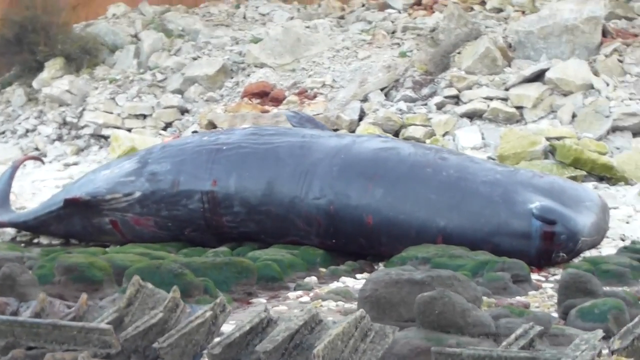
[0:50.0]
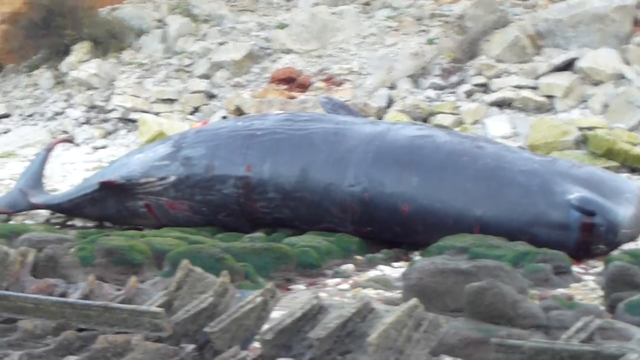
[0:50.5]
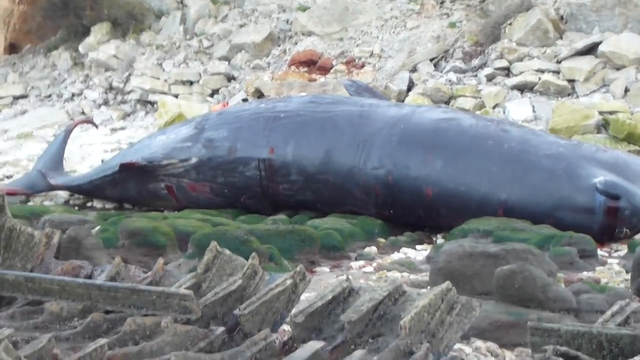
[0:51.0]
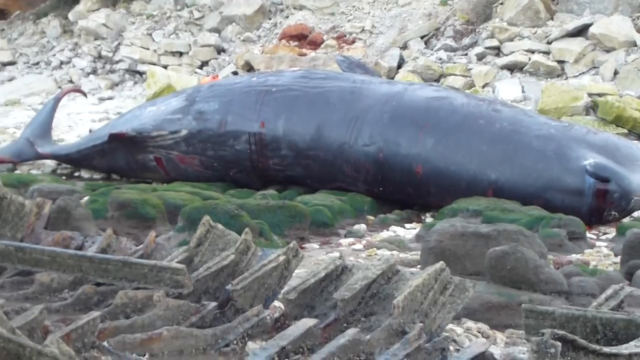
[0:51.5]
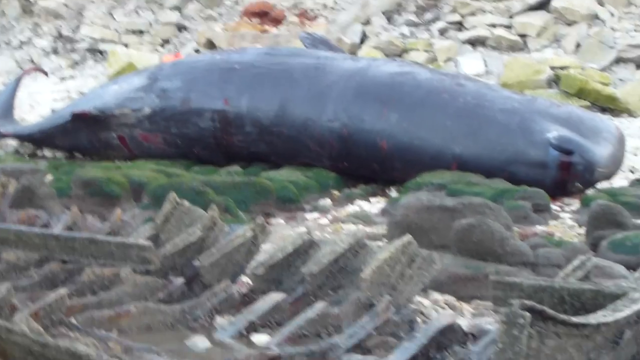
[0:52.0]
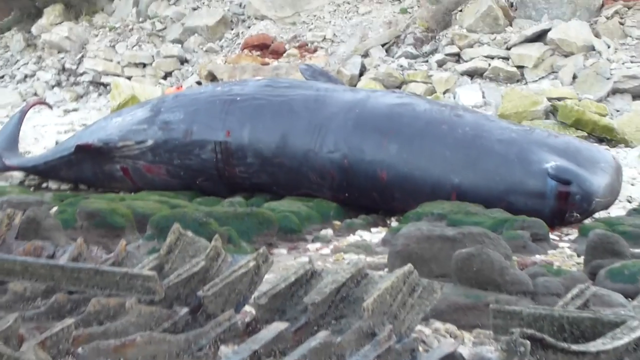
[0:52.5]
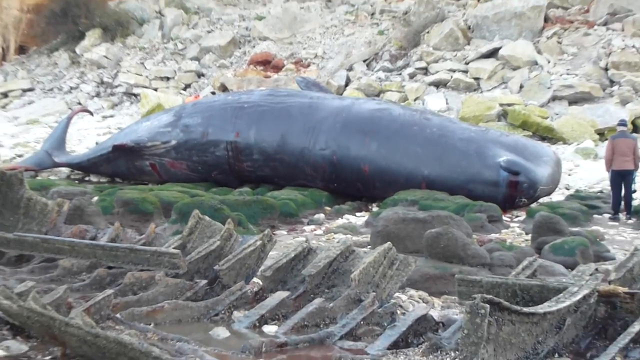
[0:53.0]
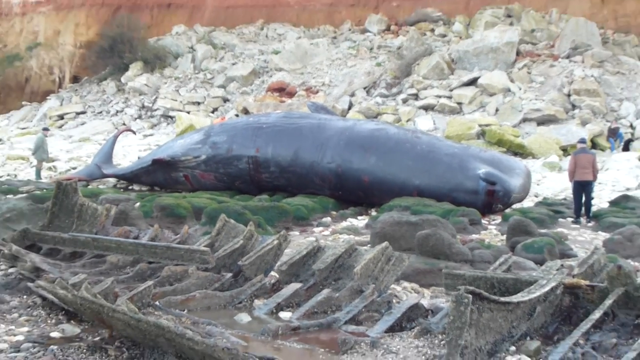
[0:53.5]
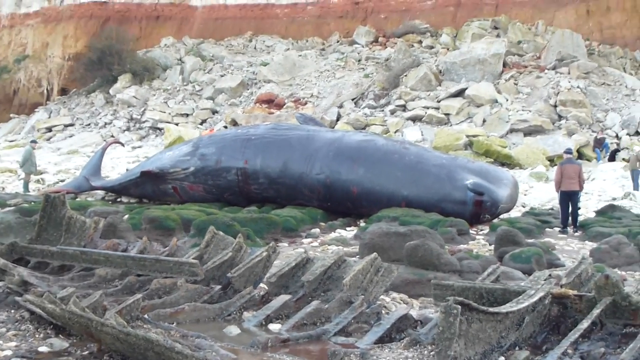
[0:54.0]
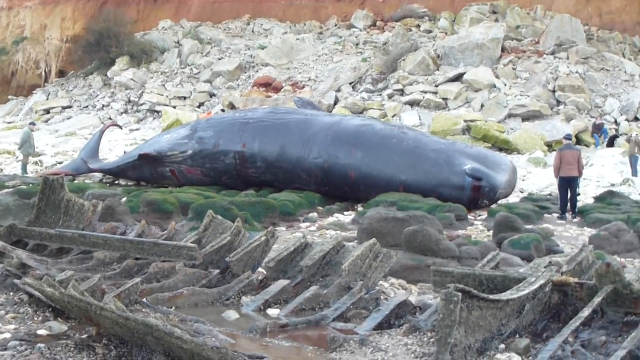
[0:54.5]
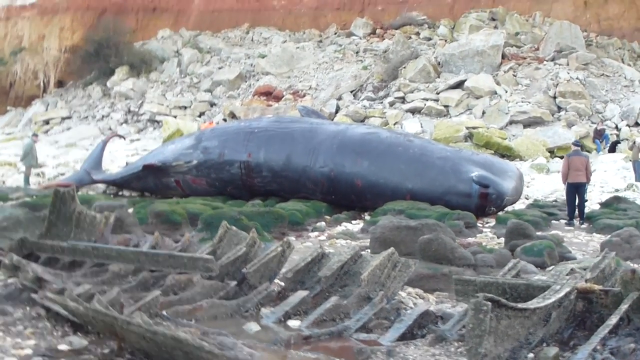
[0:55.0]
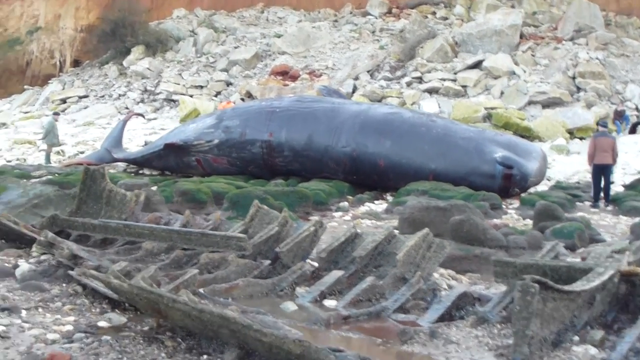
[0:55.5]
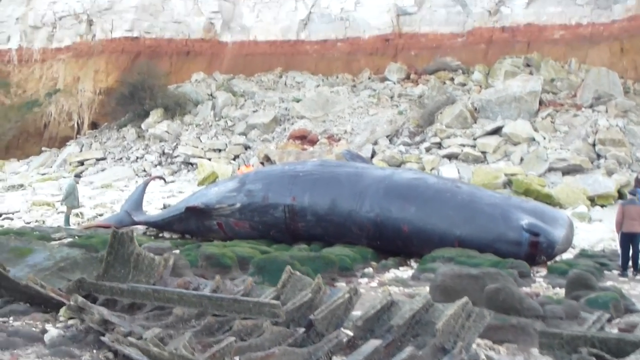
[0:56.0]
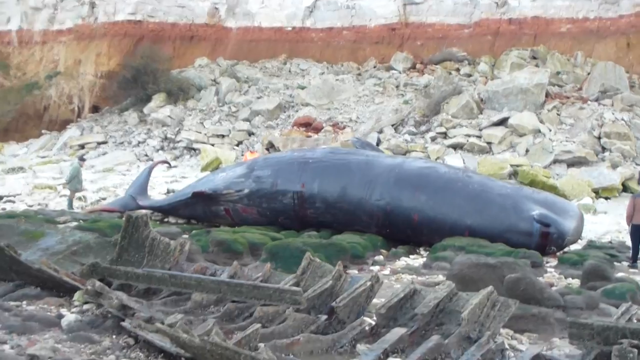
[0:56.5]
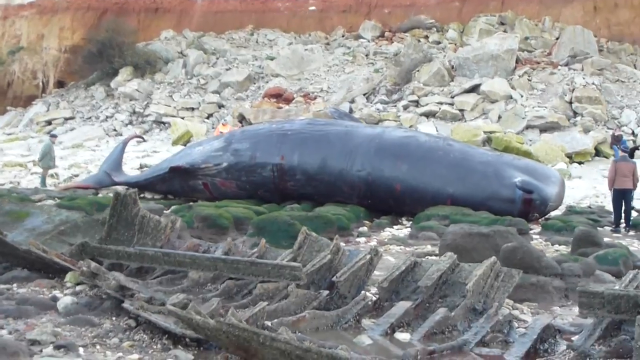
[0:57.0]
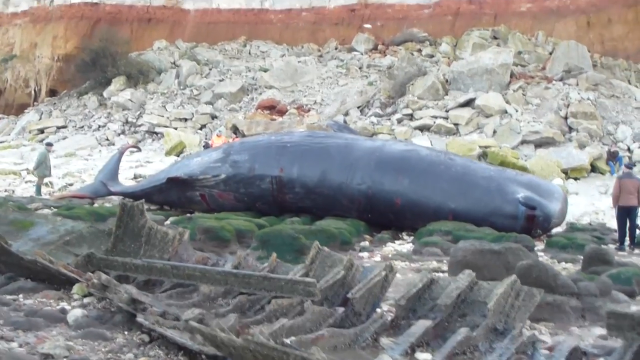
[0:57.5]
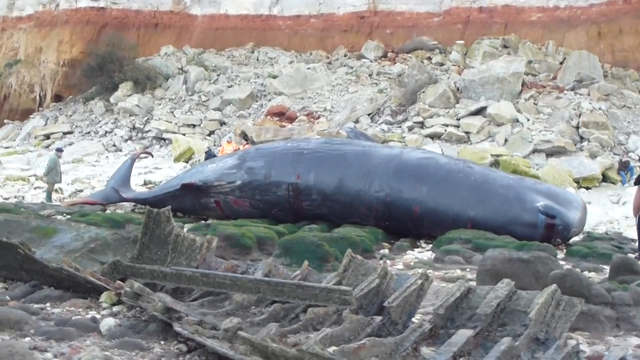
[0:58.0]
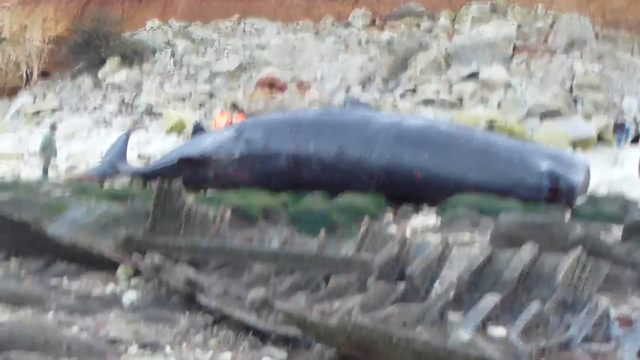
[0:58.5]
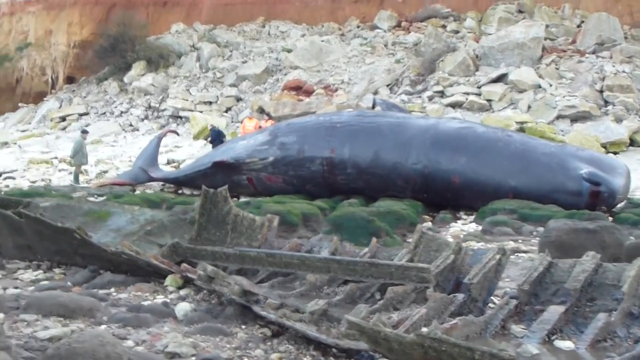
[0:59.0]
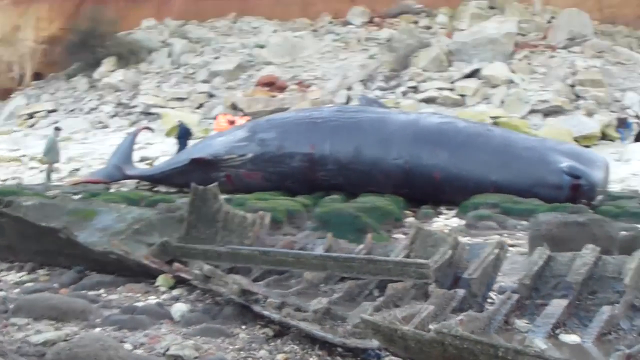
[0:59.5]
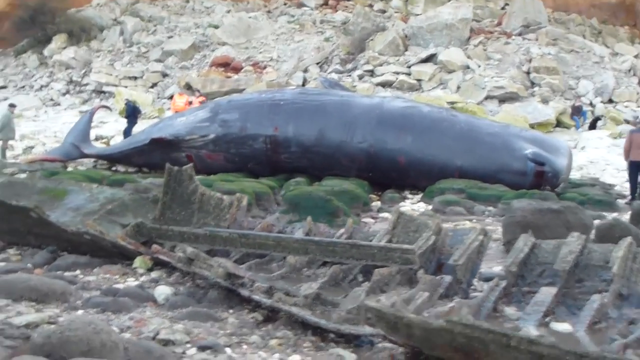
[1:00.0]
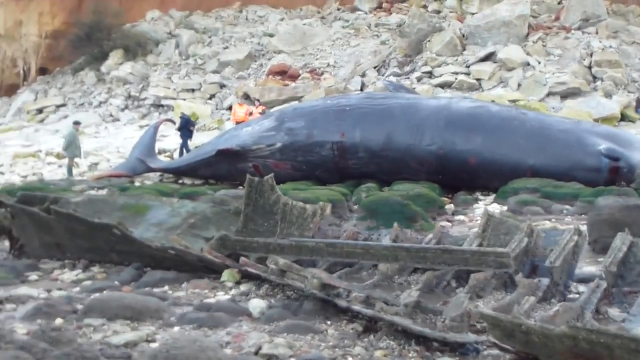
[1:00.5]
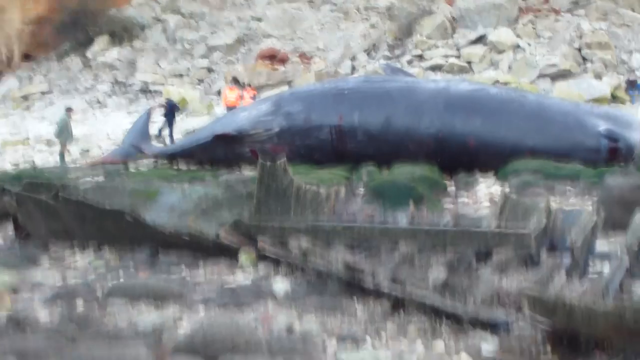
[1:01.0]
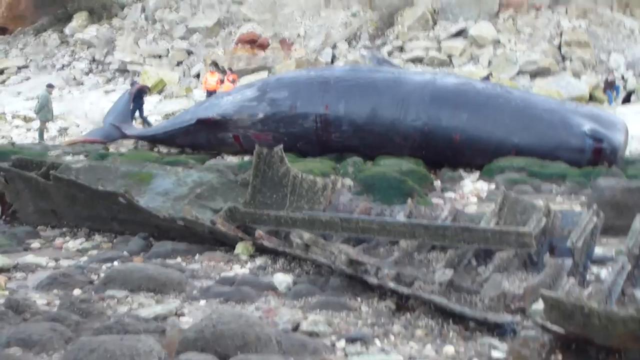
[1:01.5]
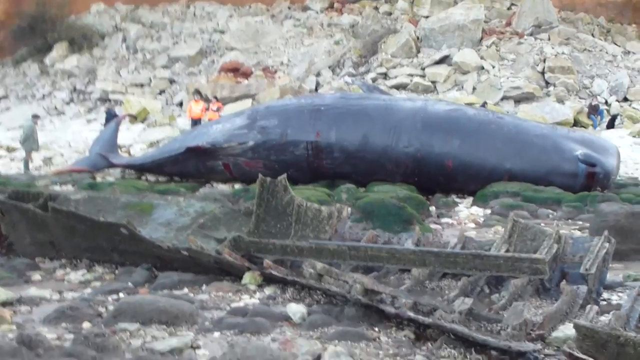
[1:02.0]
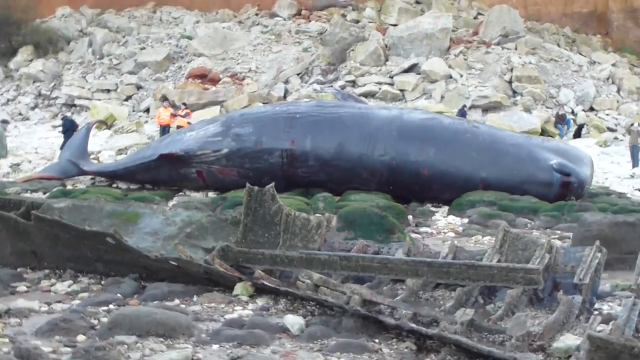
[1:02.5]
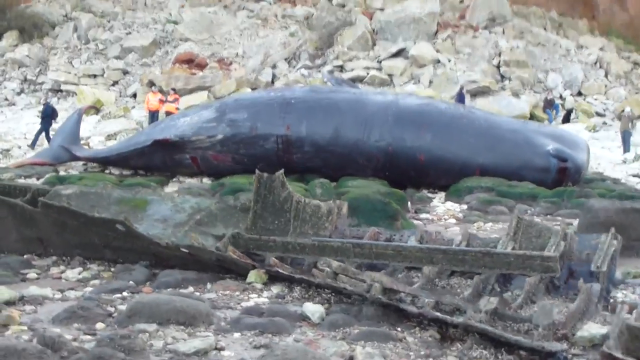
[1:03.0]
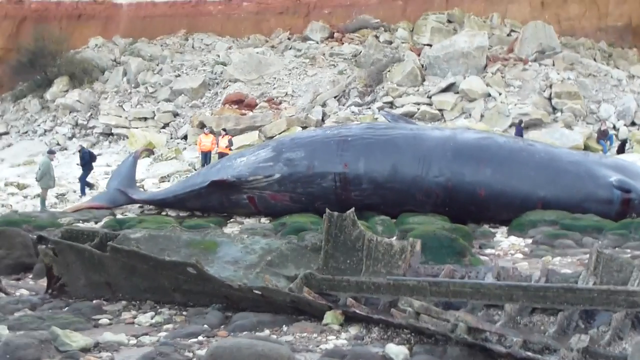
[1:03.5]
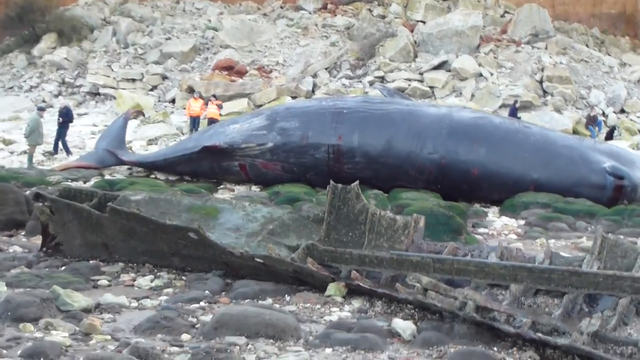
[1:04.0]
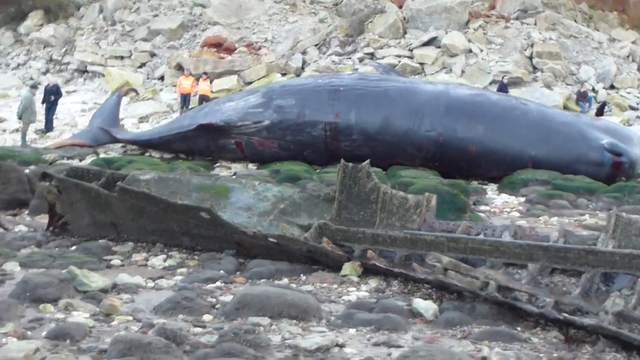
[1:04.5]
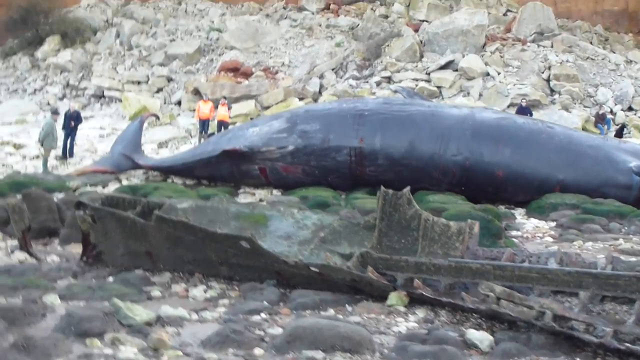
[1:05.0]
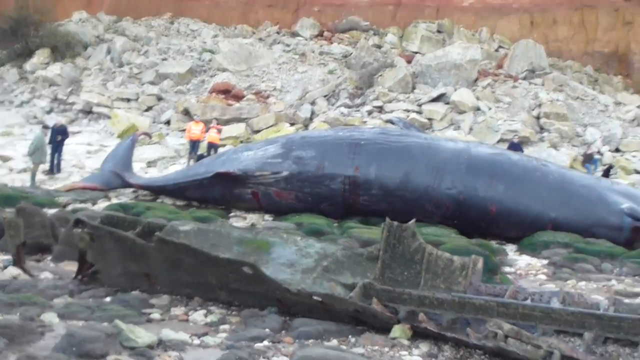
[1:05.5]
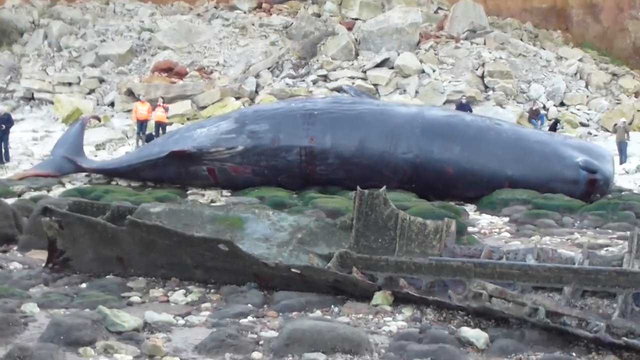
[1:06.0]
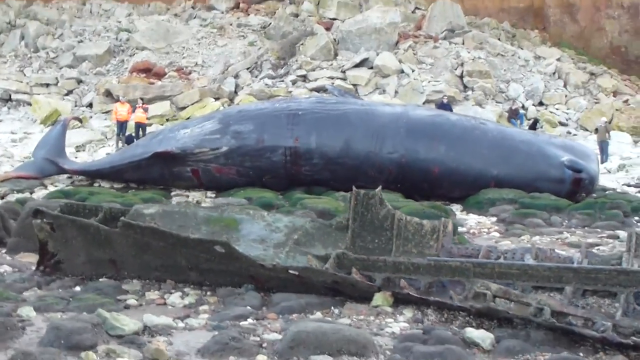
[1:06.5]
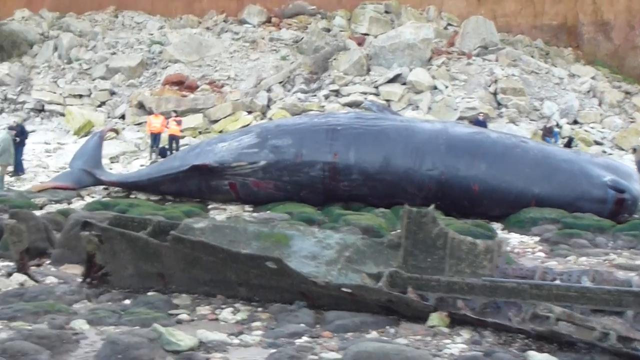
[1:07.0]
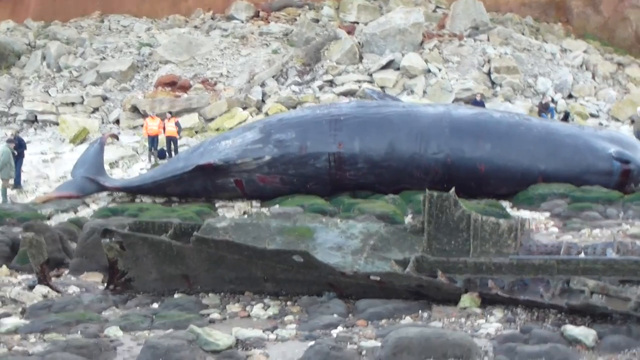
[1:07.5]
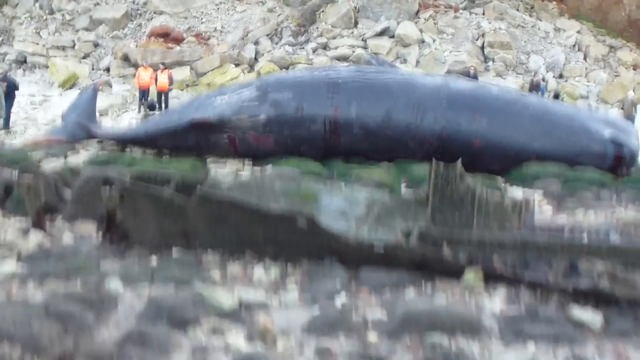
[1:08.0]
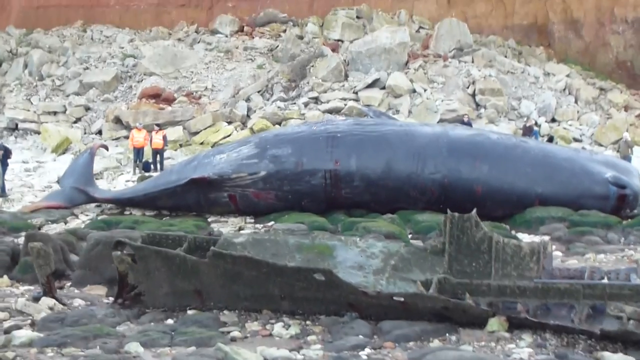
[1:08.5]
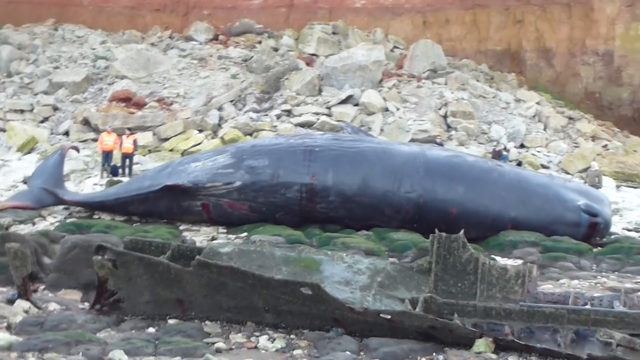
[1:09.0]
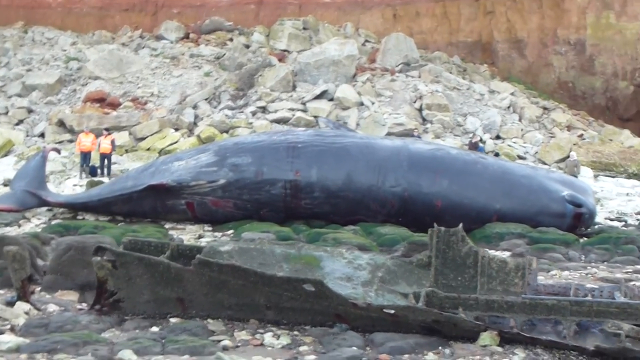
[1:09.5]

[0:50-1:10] The setting is a rocky, stony beach with jagged rocks as well as medium to large smooth stones. The wreckage of a boat is here; it looks as if it has been here for quite a while and is rotted. A section of gray stones has what appears to be green moss on it, and a dead, dark gray whale lies on that section. The whale is seen from its head to its tail, looking along its back. Blood comes out of its nostrils, and there are gashes along its back, with deep gashes especially at its tail end. Many people stand around watching and looking at the whale. The video sort of pans down the length of the whale. The mountain here is a red mud color at its base and white at its top.